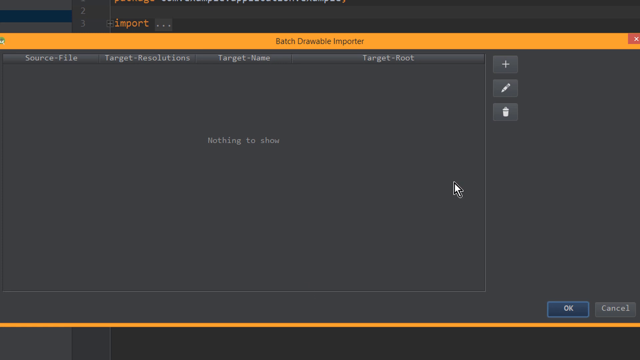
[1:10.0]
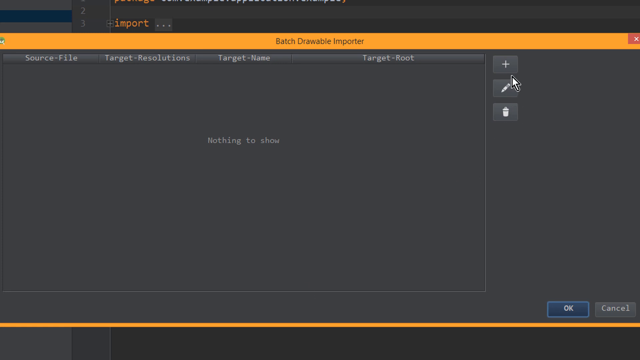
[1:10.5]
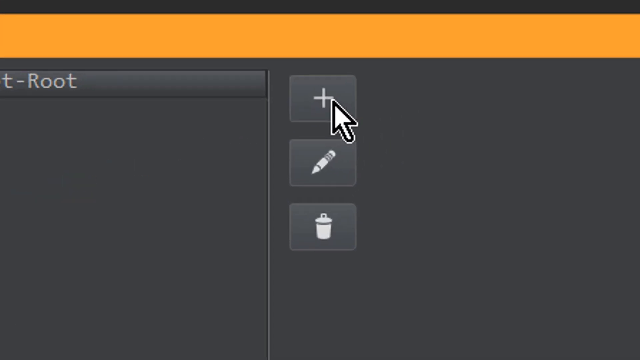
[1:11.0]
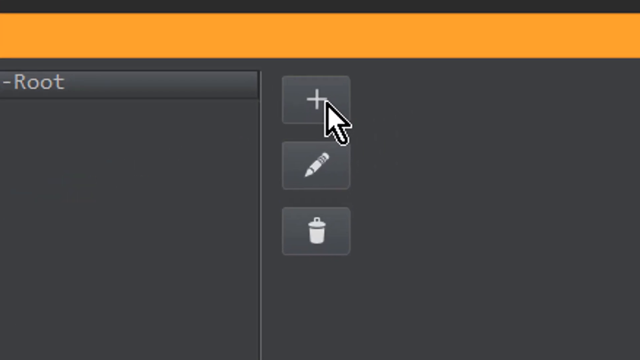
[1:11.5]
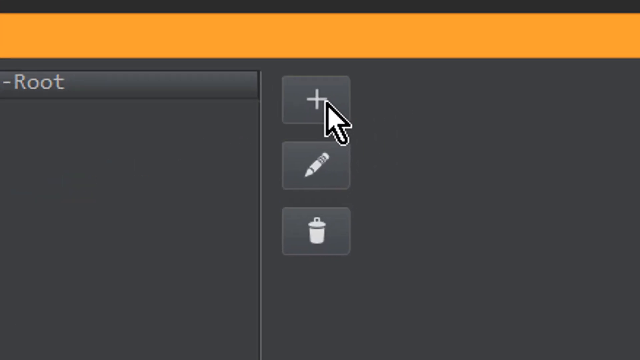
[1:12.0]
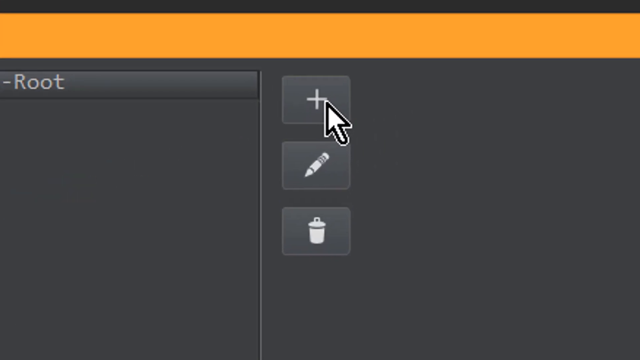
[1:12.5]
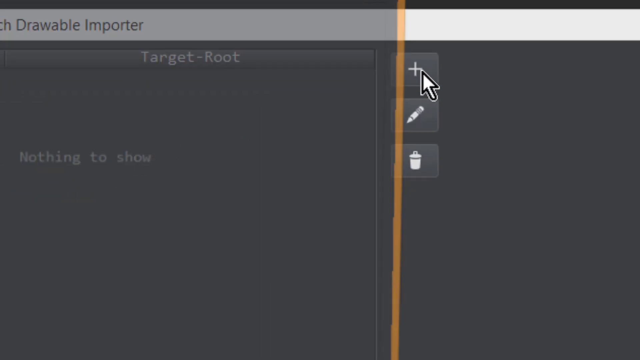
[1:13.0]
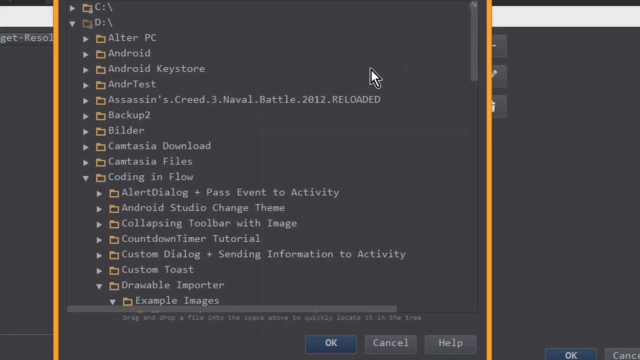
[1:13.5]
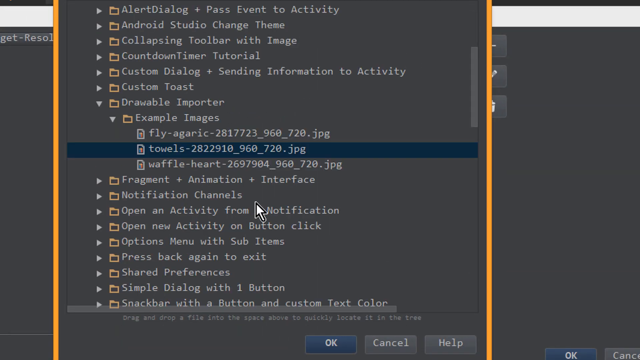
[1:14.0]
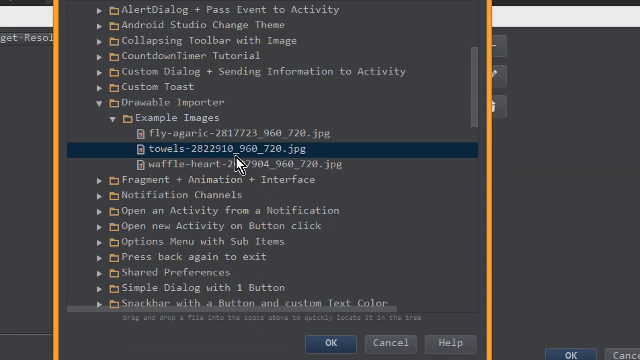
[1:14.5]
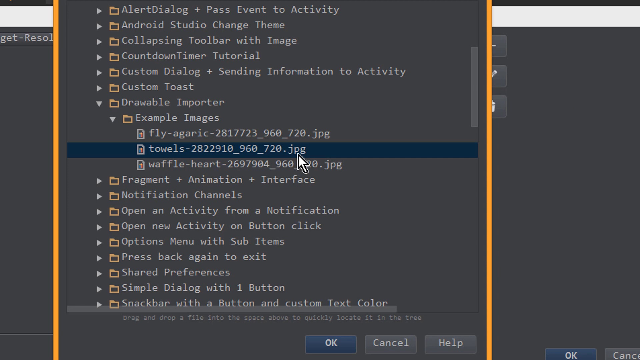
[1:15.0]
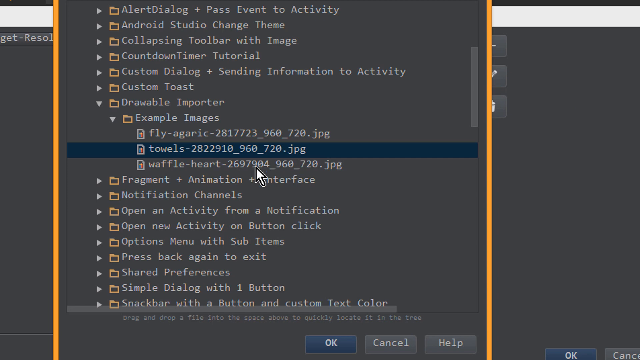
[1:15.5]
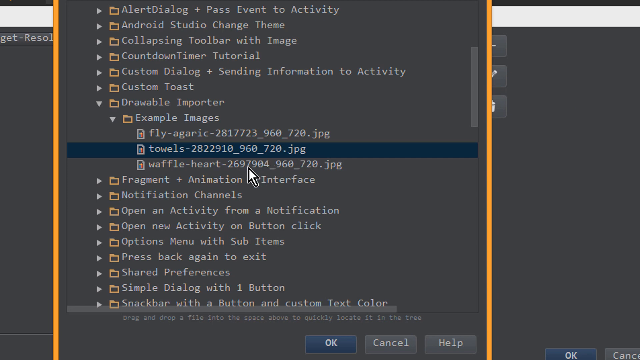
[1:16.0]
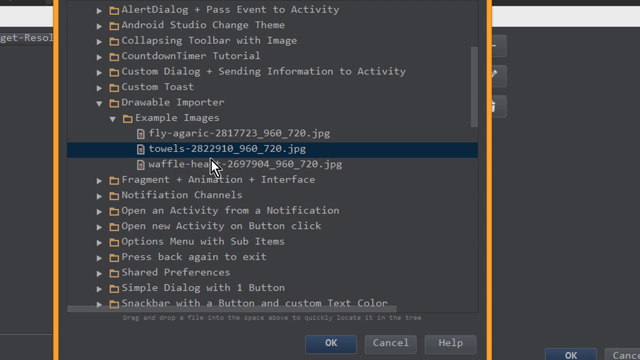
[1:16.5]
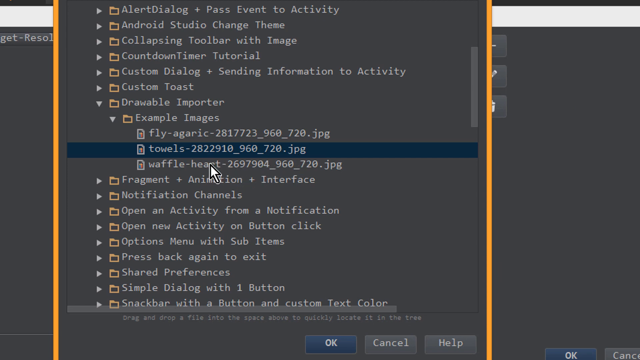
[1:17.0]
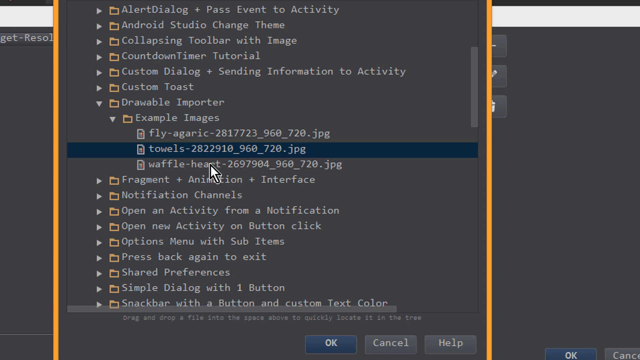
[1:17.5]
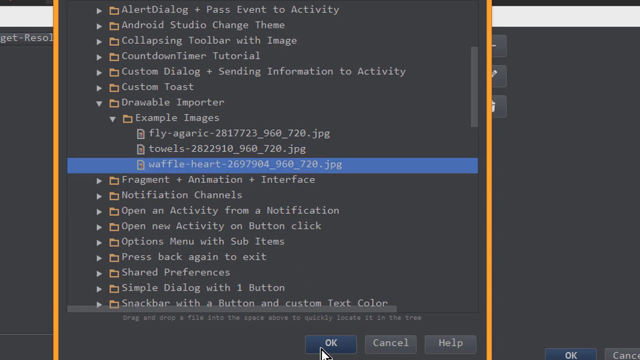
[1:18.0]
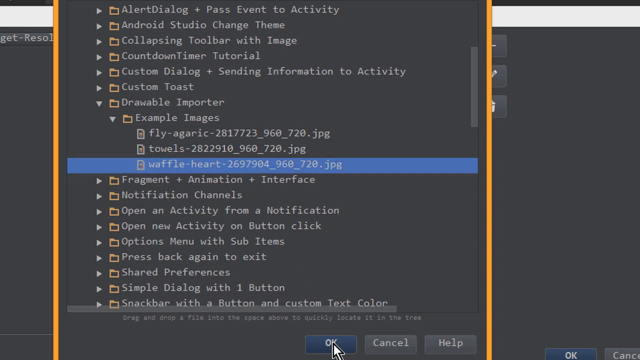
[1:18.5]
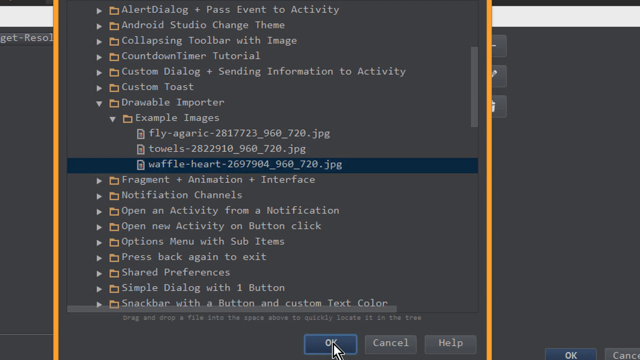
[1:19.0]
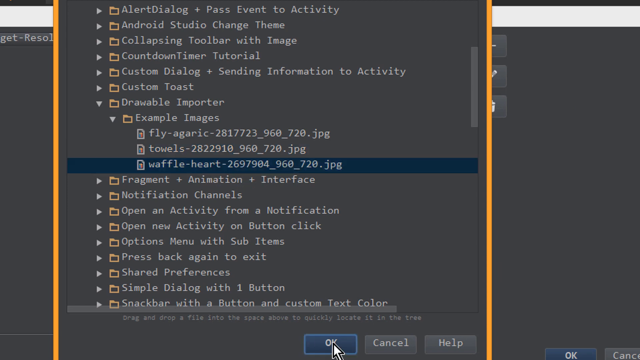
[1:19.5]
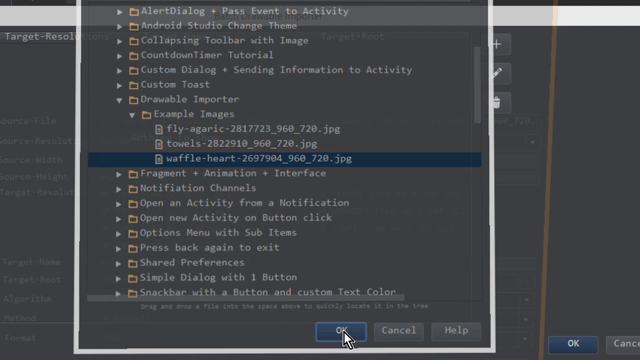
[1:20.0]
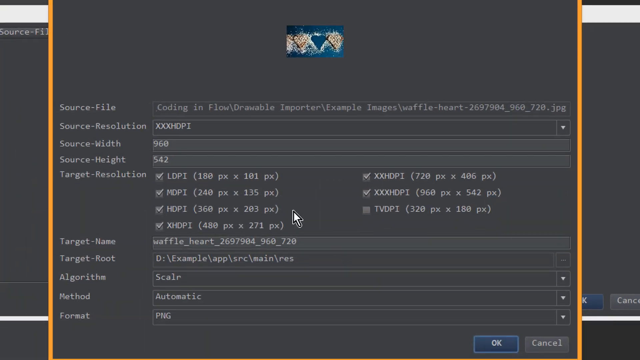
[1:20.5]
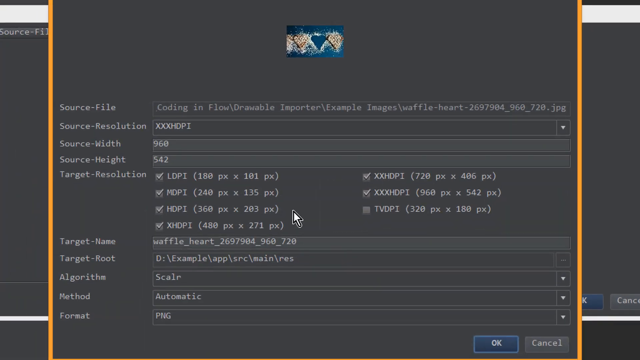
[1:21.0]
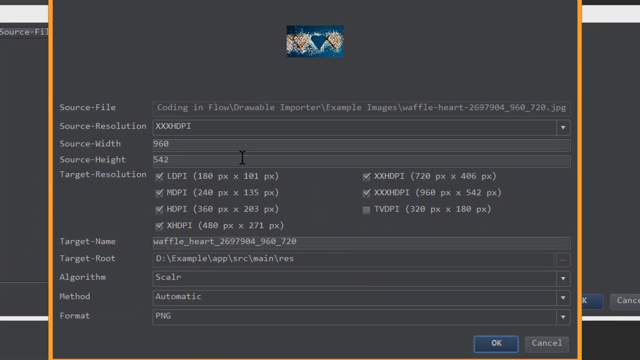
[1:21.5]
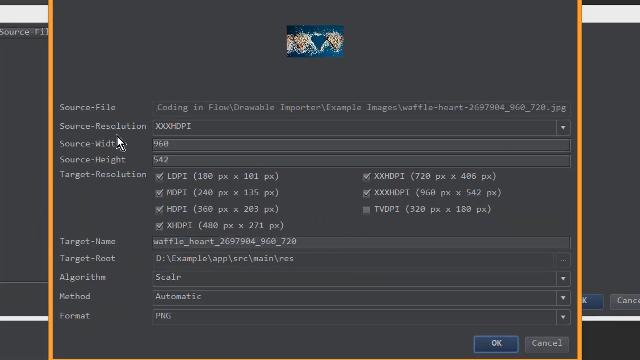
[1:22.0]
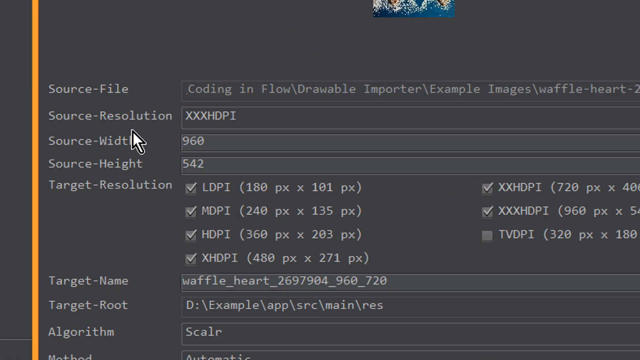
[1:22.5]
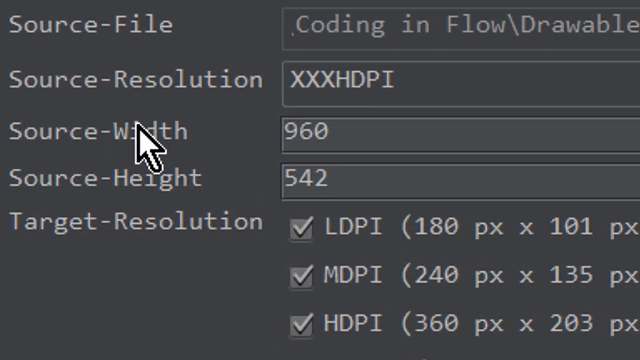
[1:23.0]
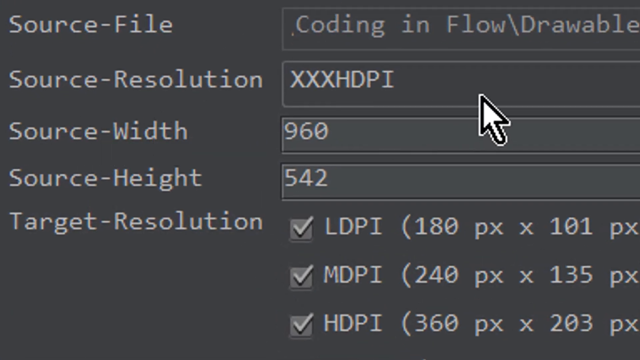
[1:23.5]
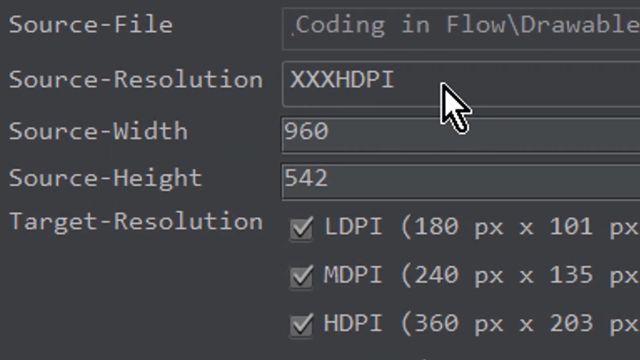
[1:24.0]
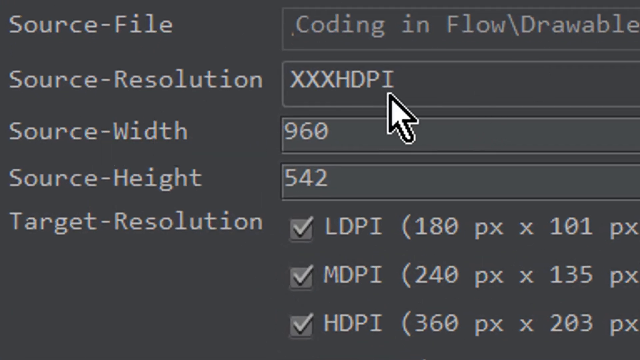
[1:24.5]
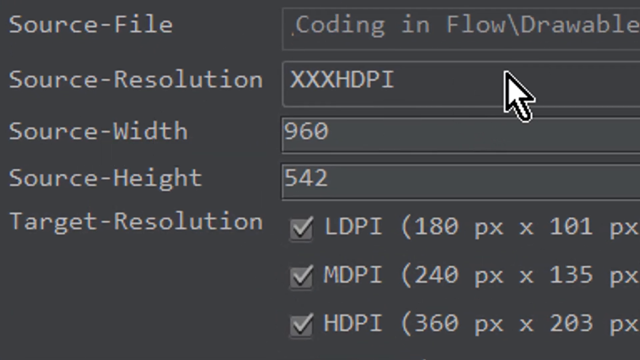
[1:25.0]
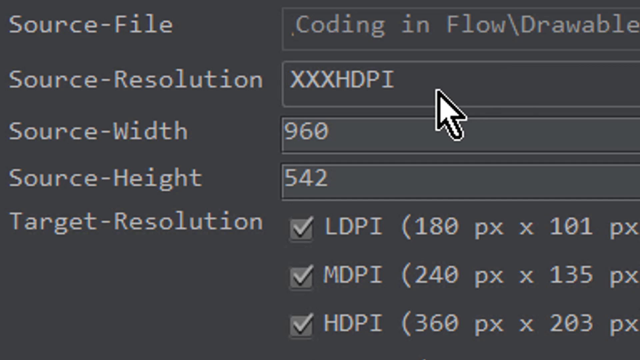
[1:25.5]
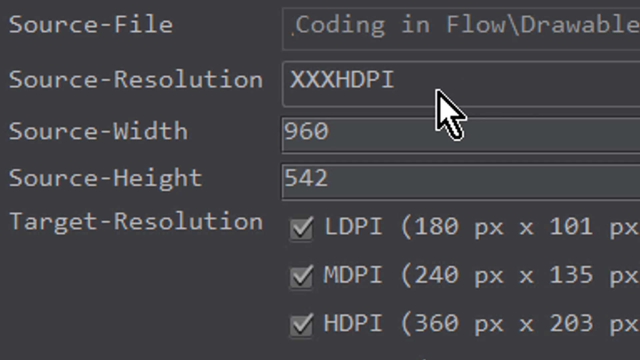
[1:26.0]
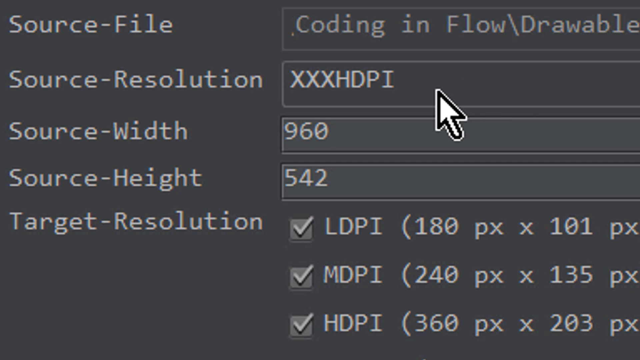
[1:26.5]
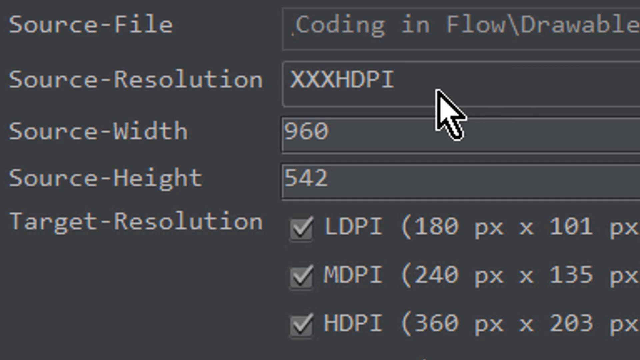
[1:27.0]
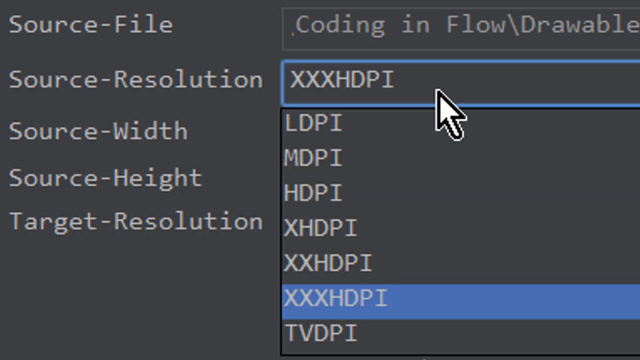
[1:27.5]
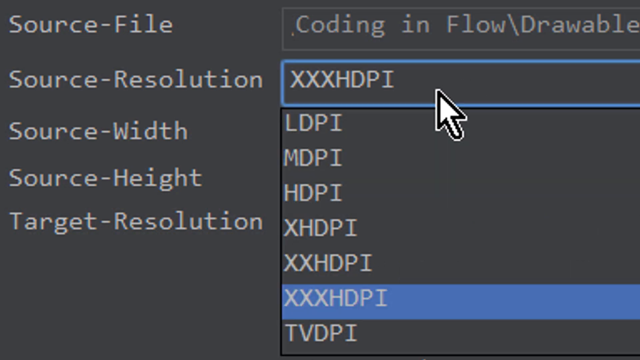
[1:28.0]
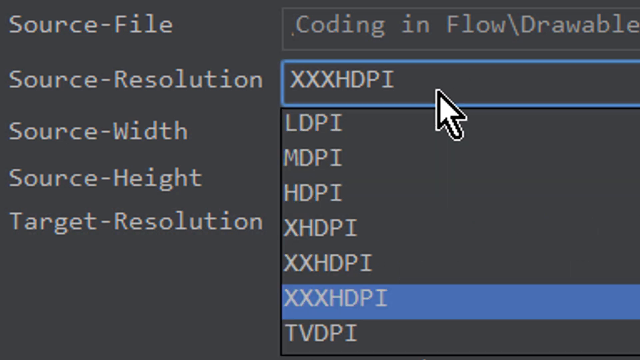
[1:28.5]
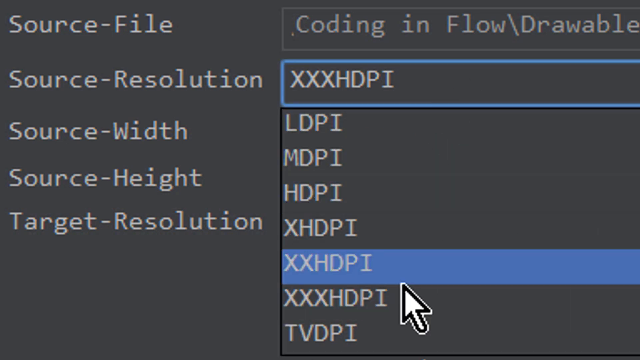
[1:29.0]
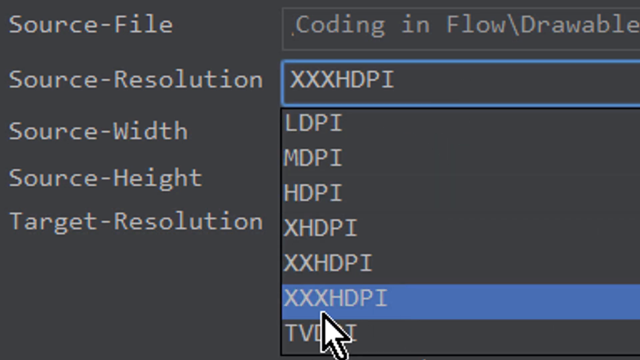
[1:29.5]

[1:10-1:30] The batch drawable importer box is shown, orange on the edge and dark grey in the middle. A white plus sign in the top right corner, surrounded by a lighter grey box, is clicked by the user, and the camera zooms in on this plus sign box. It briefly highlights in blue as it is selected, then a new dark grey box with an orange border pops up with many folders listed vertically. The user has opened "example images" and selects the towels JPG file, then clicks on the waffle heart JPG file, which highlights in blue. They scroll all the way down to the bottom of the box and click a blue button with white text reading "OK". A different pop-up appears, showing the selected image at a small size at the top, followed by a lot of information: source file, source resolution, source width, source height, target resolution, target name, target route, algorithm, method and format. The camera zooms in on the white text "Source File", "Source Resolution", "Source Width", "Source Height" and "Target Resolution" in the top left of the box. The user clicks on the source resolution box, which reads "XXXHDPI"; it highlights with a blue border and a drop-down of different options appears underneath.